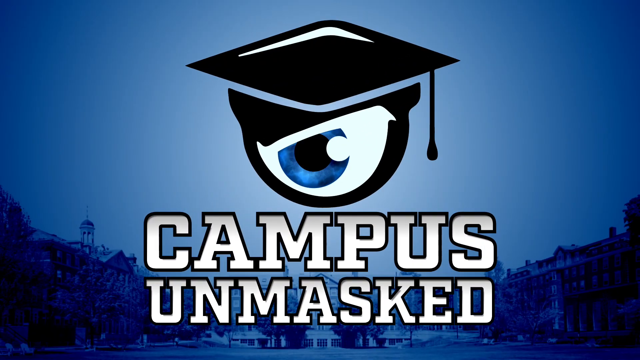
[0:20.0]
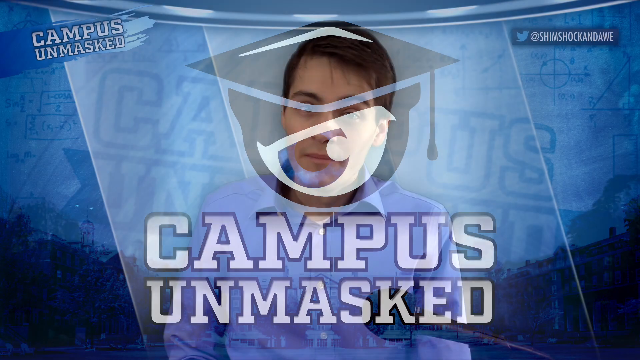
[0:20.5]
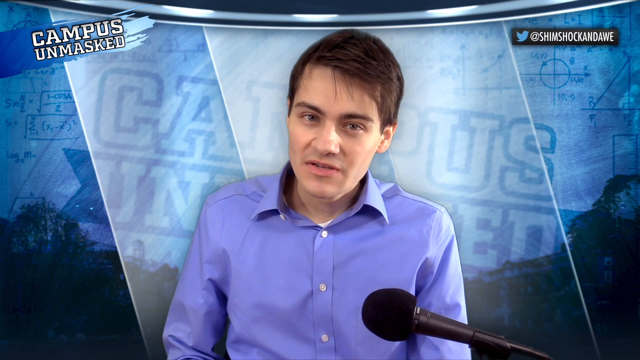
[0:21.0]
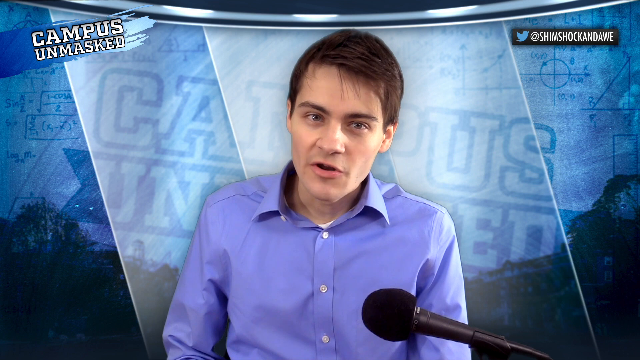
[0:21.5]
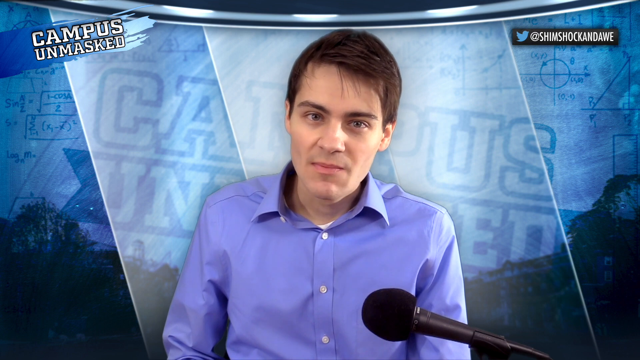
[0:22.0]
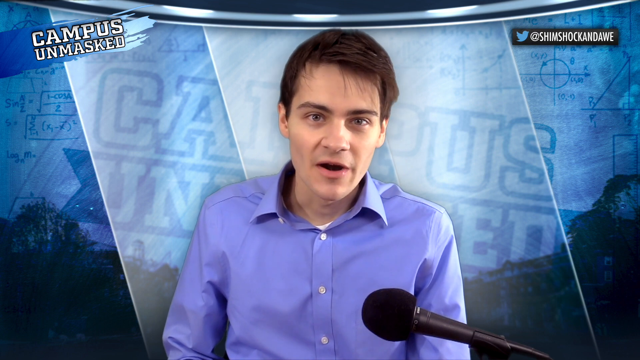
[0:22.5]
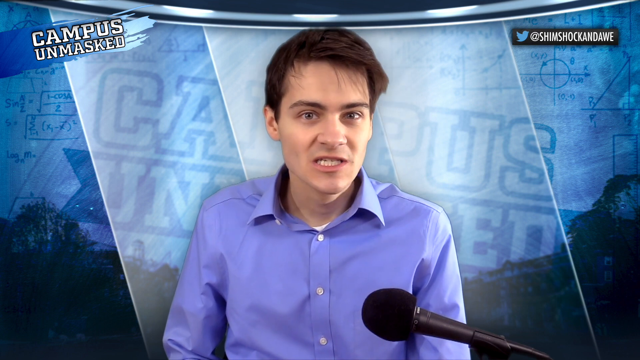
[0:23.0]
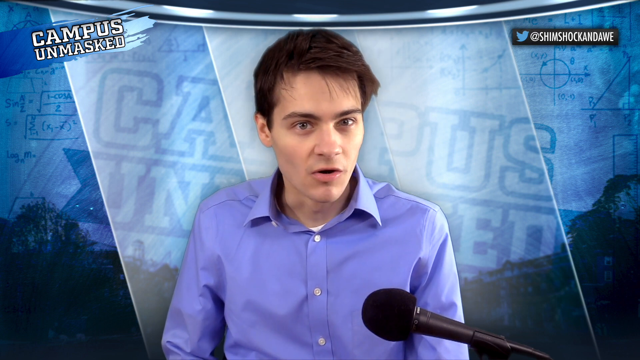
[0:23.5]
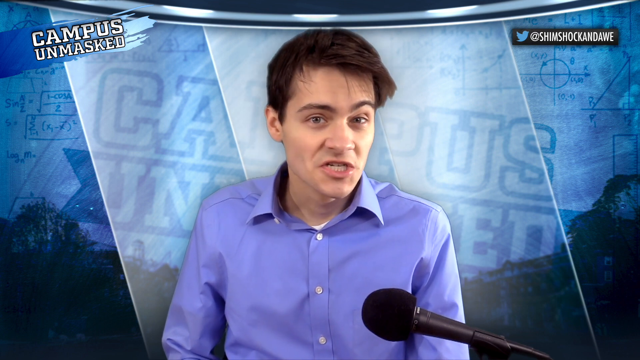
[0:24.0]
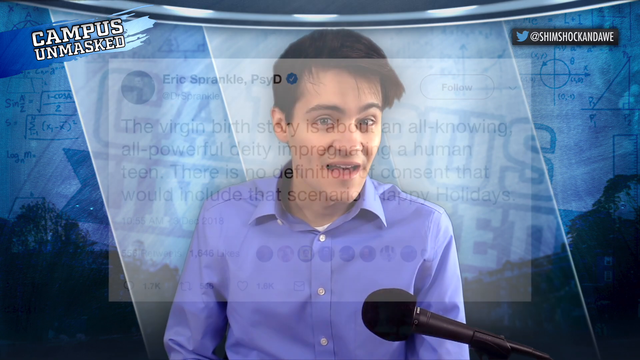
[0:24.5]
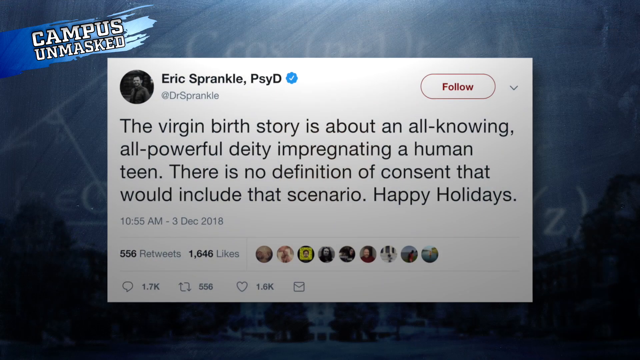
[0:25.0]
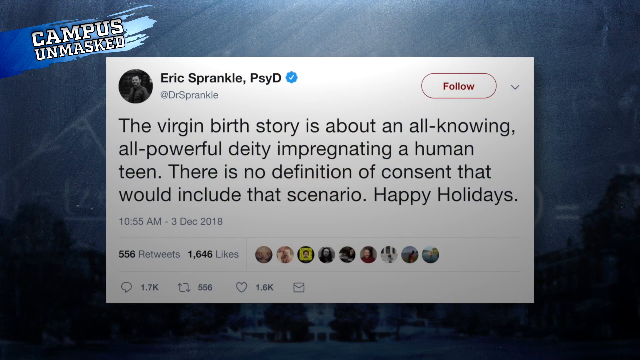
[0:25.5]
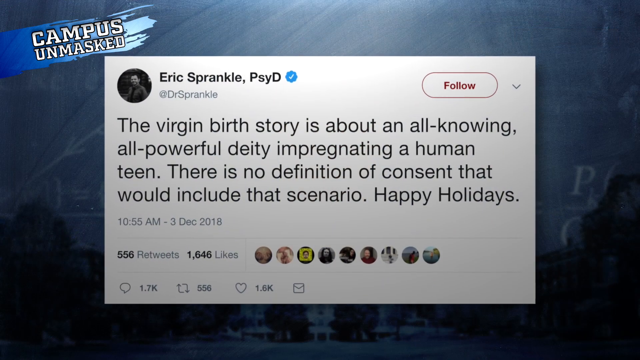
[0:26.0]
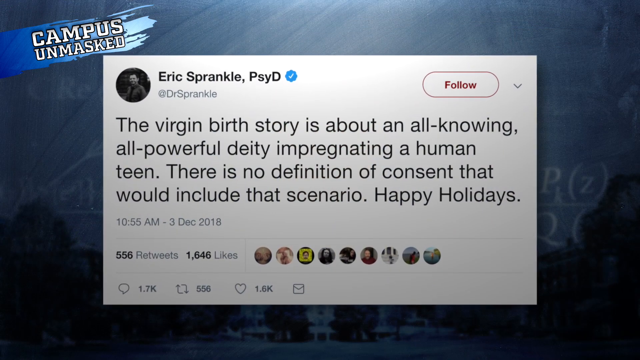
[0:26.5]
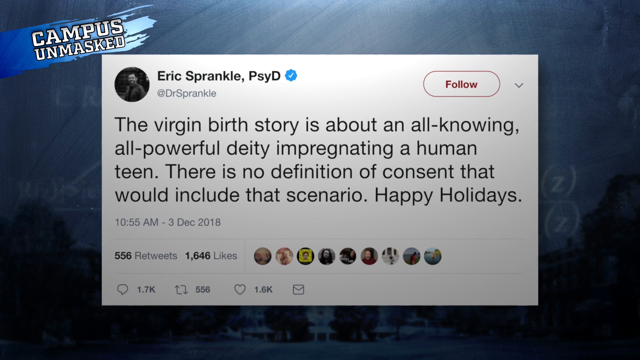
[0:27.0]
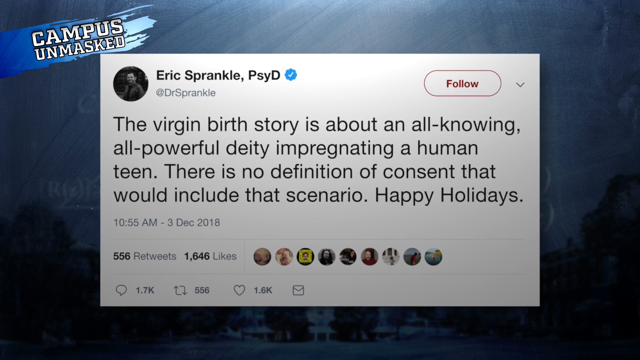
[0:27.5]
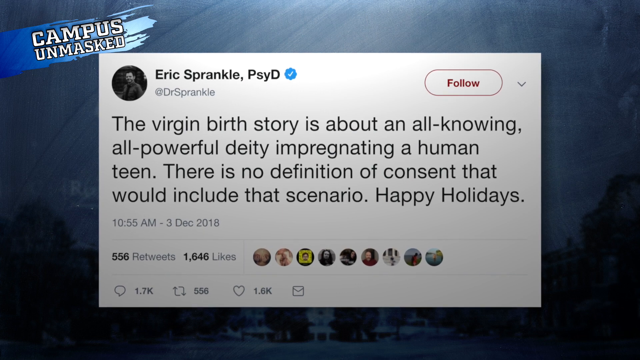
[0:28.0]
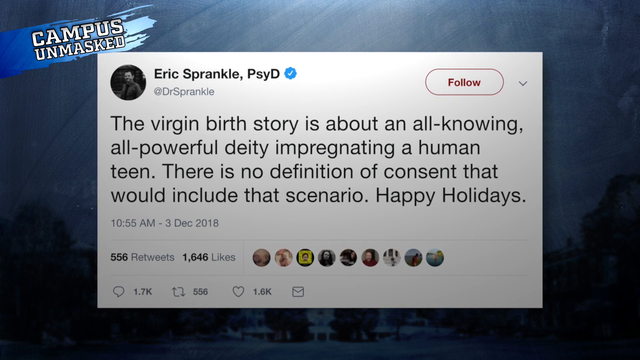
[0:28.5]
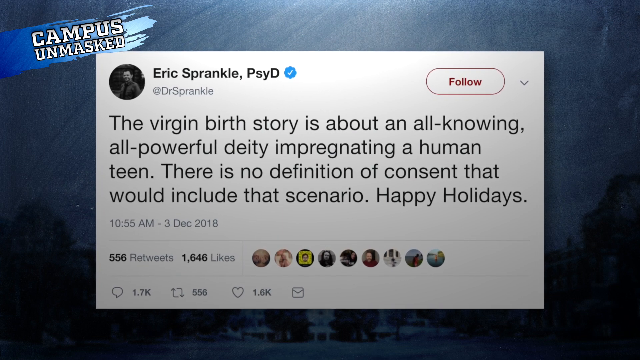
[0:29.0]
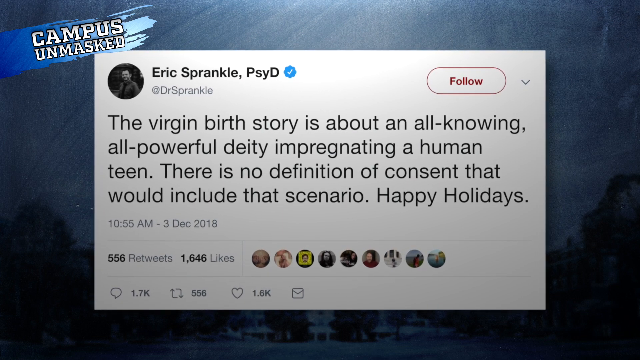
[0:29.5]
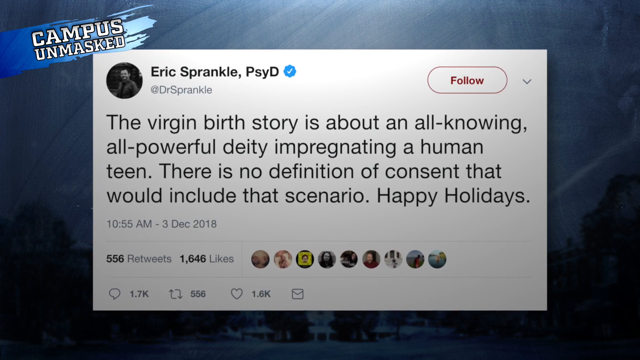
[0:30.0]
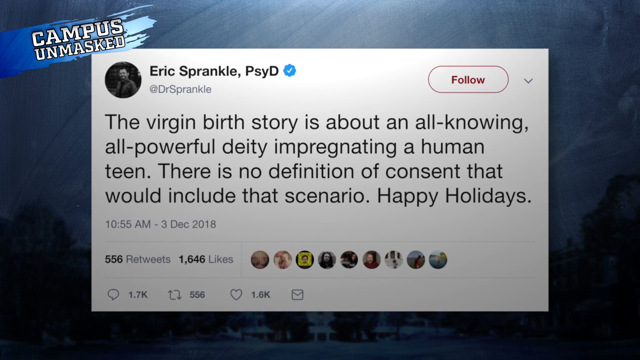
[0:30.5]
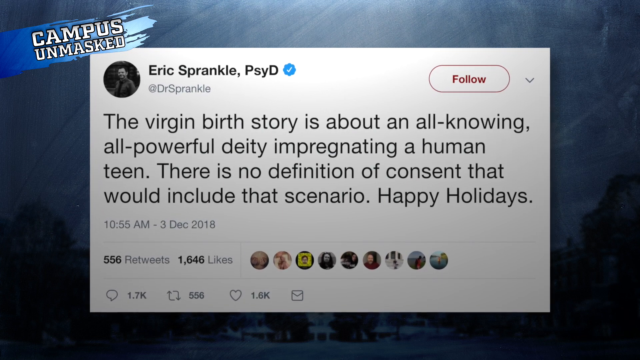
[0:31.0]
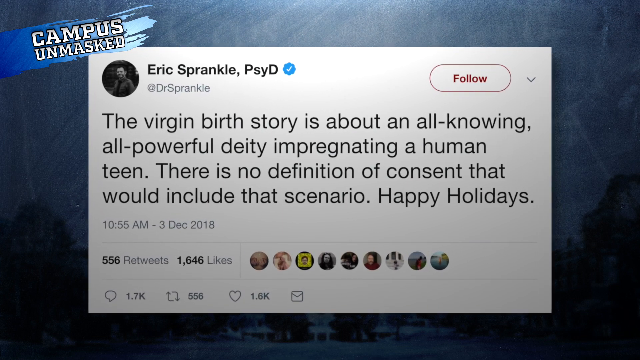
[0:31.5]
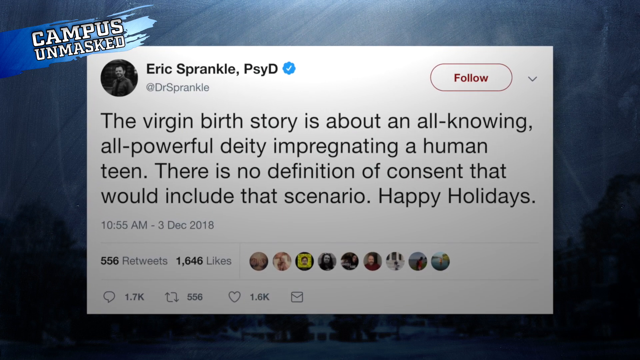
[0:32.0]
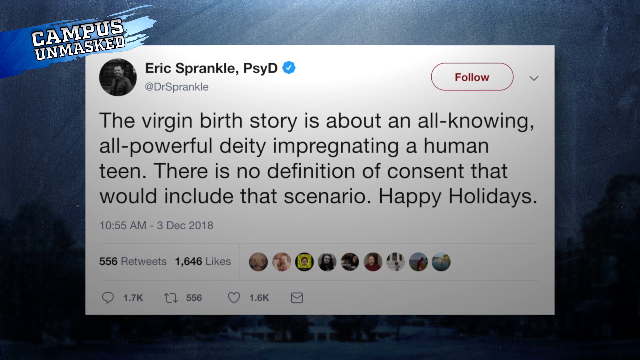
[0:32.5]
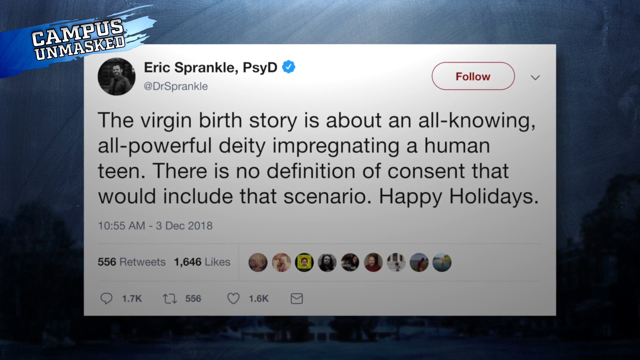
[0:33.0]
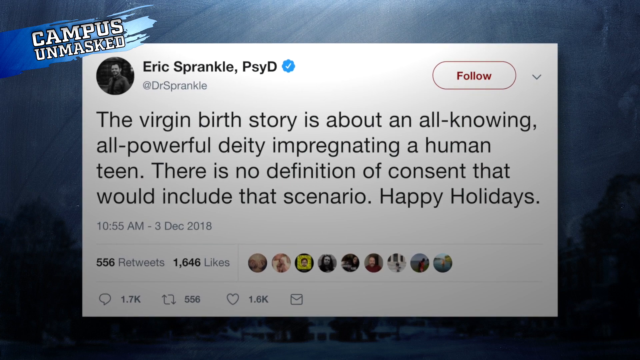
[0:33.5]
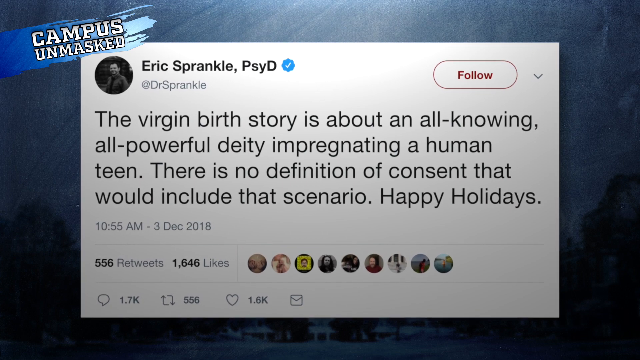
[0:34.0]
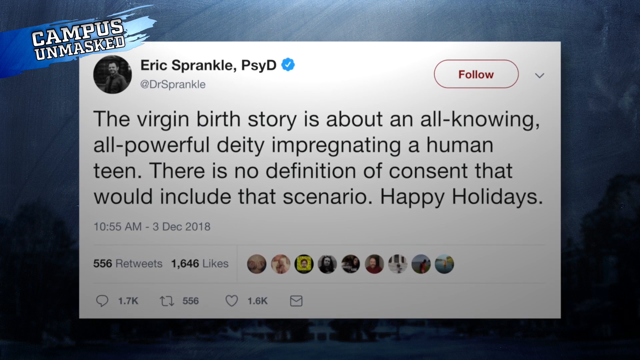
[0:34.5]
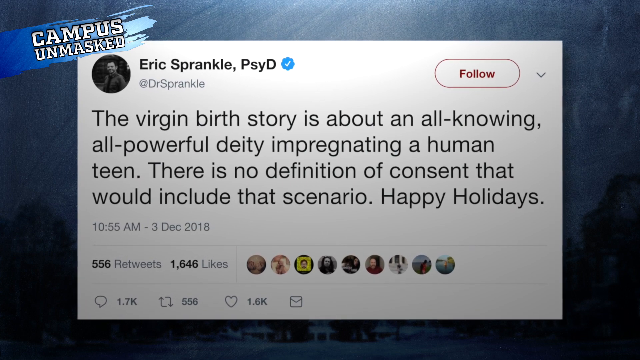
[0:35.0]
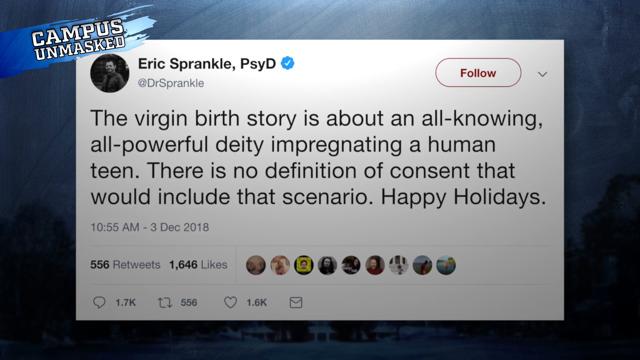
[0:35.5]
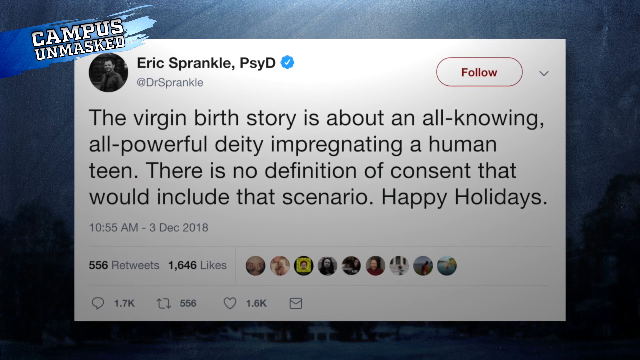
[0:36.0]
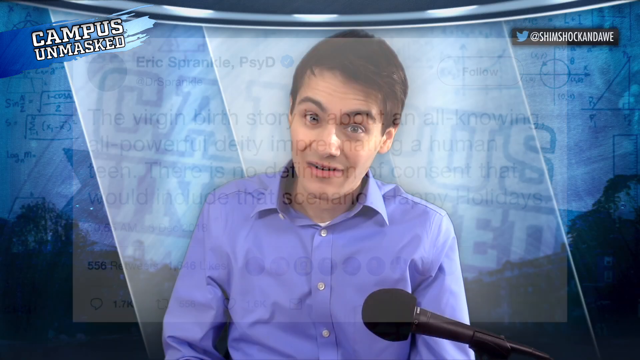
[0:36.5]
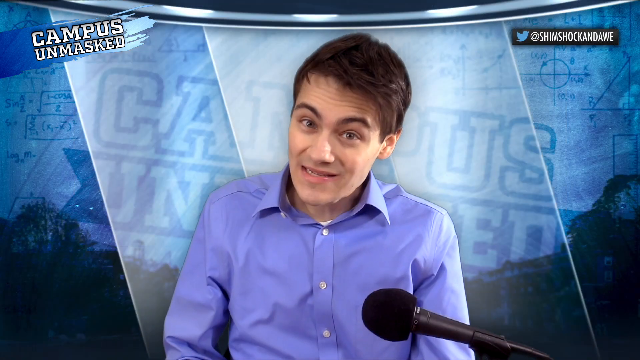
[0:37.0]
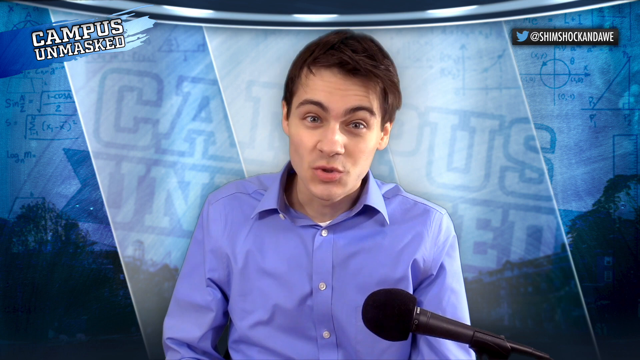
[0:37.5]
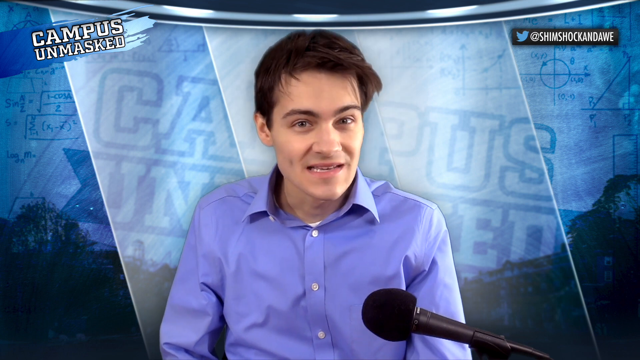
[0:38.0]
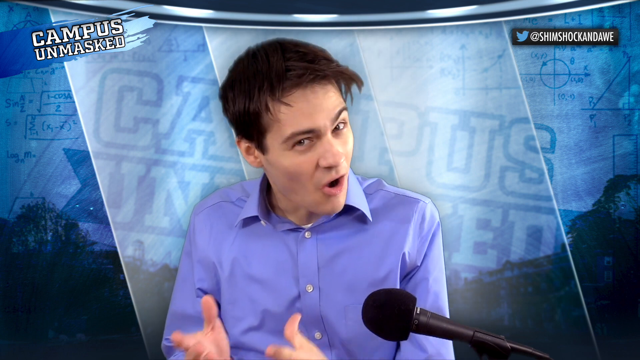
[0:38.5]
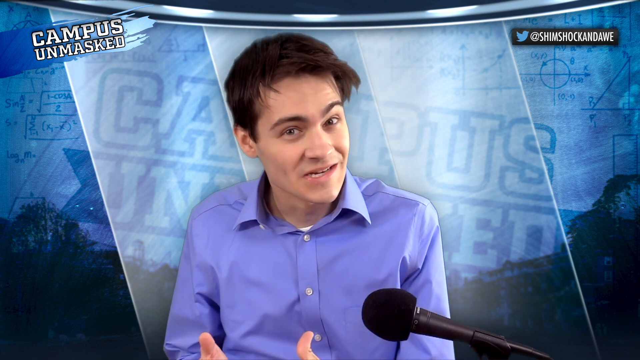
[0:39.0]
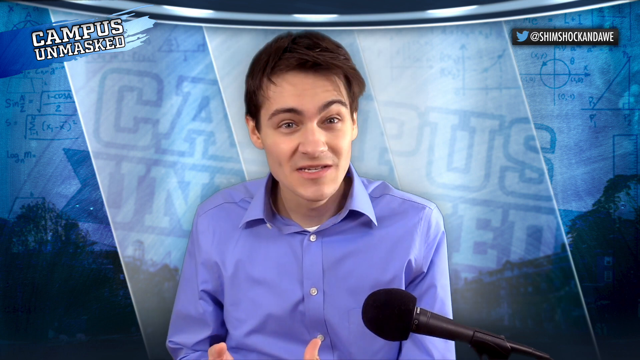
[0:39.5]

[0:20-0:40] In Campus Unmasked, a young man who appears to be a very conservative college student, wearing a blue button-down shirt, talks into a microphone. The video cuts back to the Campus Unmasked logo: a blue eyeball with a mortarboard on top, the eyeball looking suspicious. The setting is some type of campus yard, with campus-type brick buildings all around. The background is blue, like the sky, and the words "Campus Unmasked" are white with a black outline.